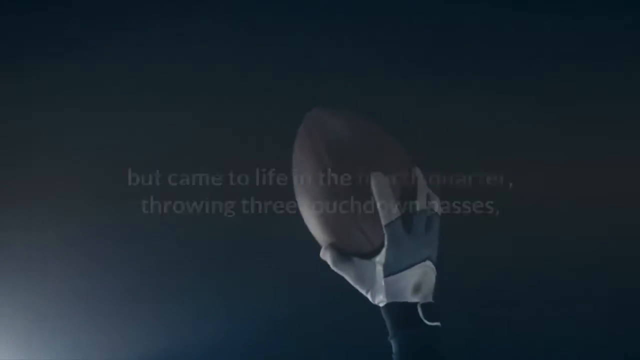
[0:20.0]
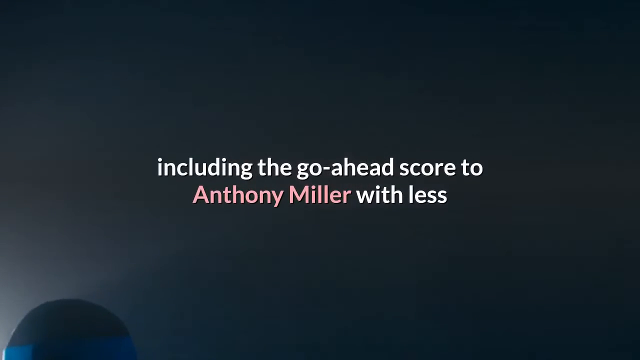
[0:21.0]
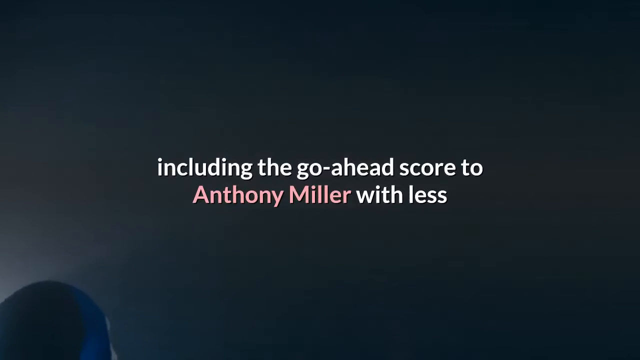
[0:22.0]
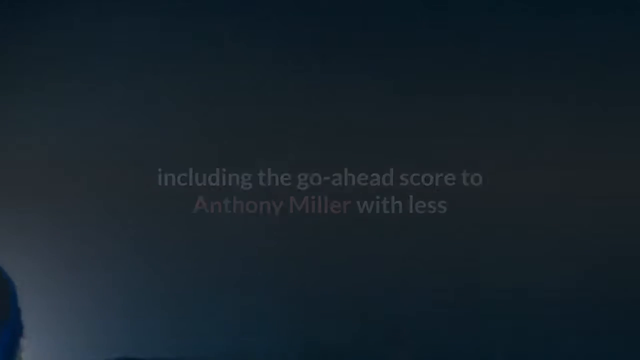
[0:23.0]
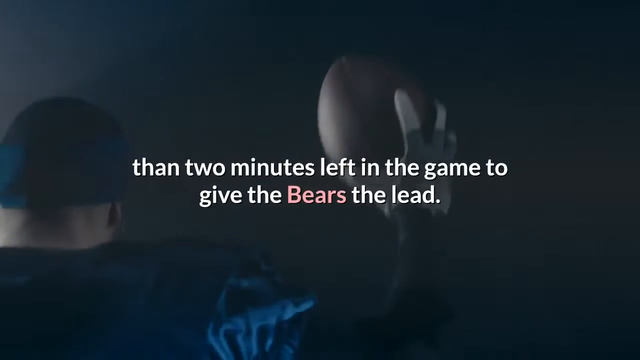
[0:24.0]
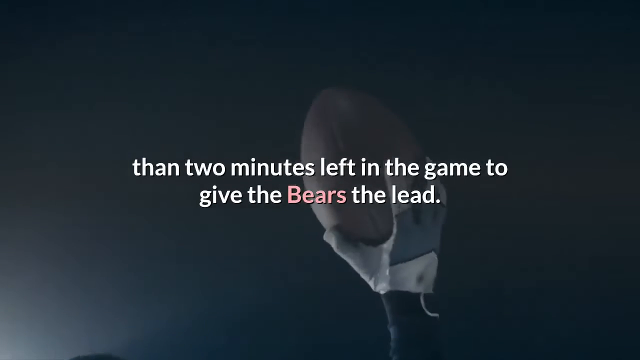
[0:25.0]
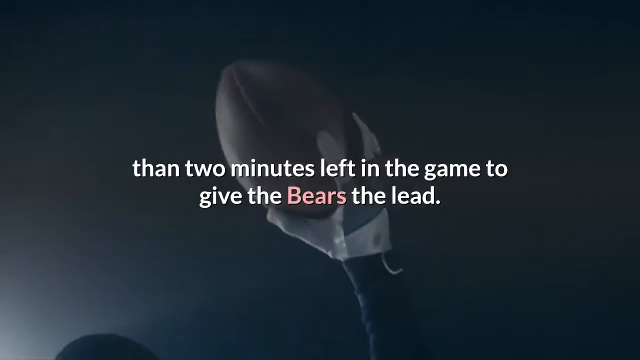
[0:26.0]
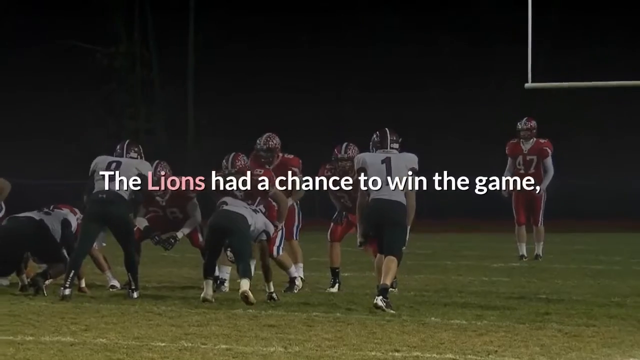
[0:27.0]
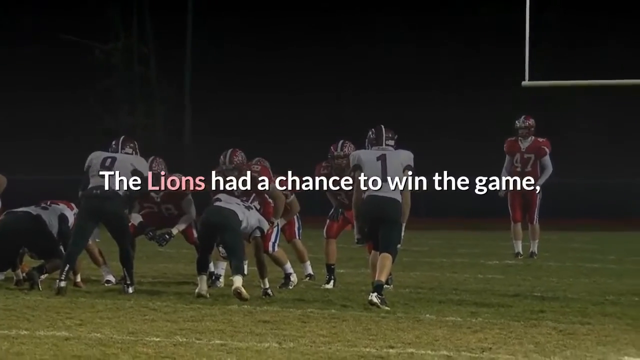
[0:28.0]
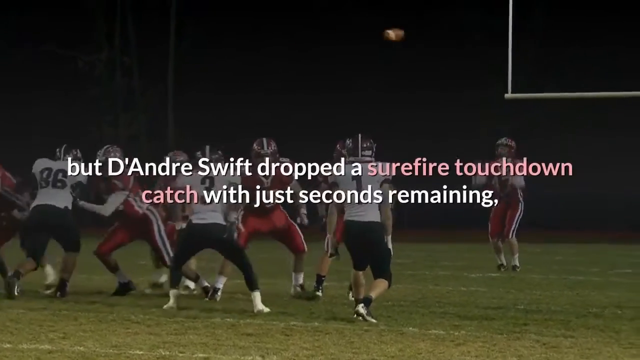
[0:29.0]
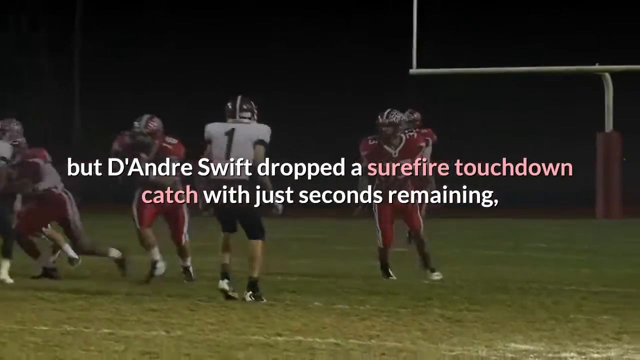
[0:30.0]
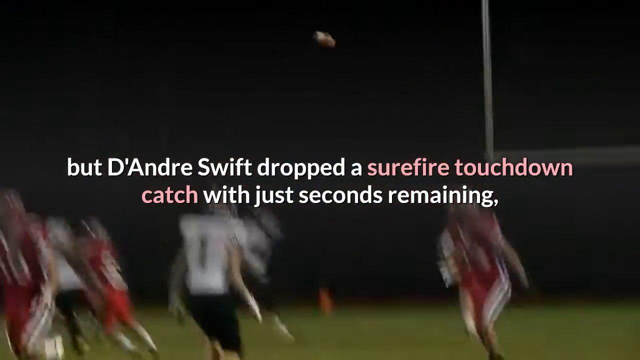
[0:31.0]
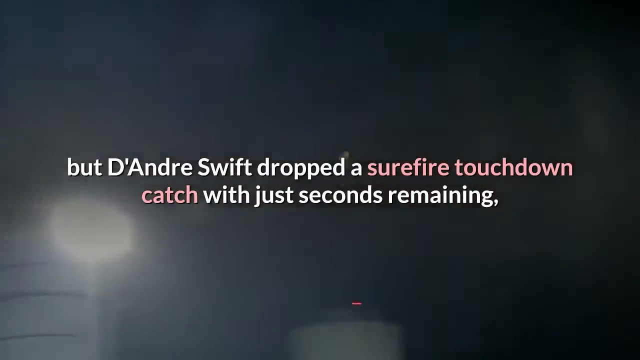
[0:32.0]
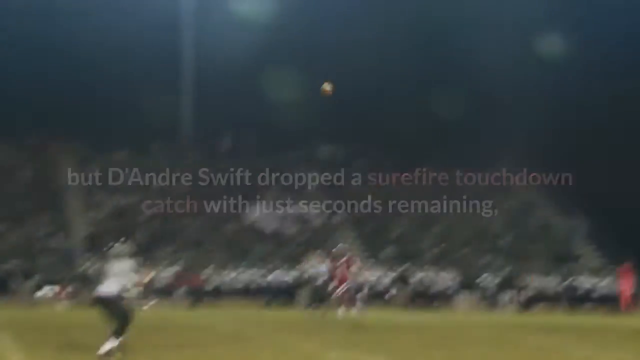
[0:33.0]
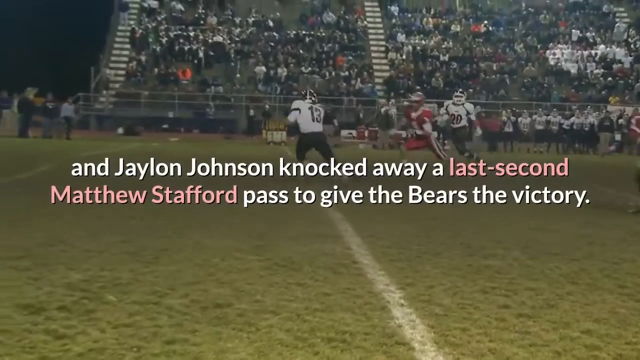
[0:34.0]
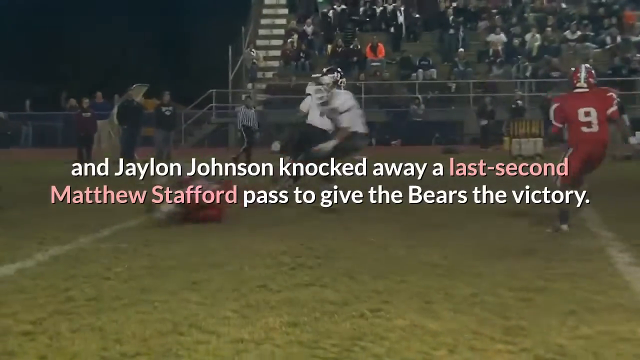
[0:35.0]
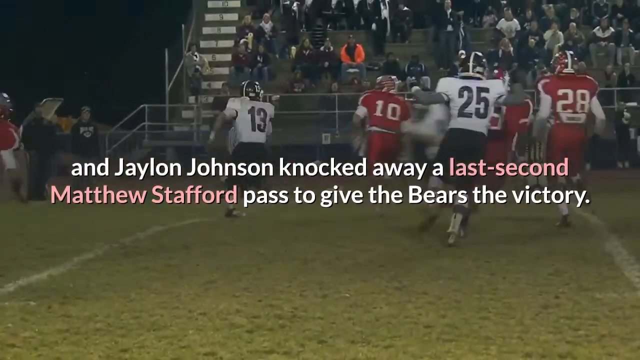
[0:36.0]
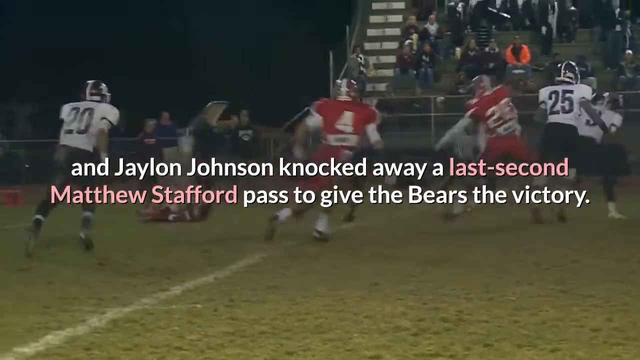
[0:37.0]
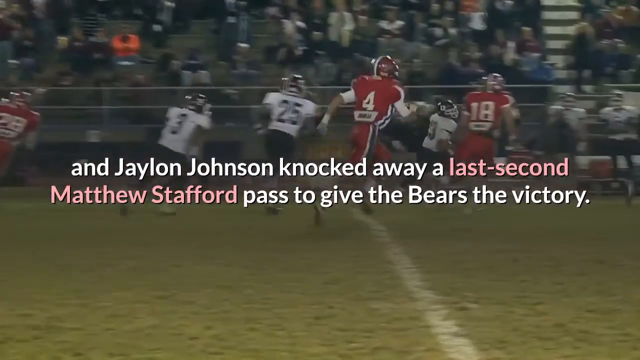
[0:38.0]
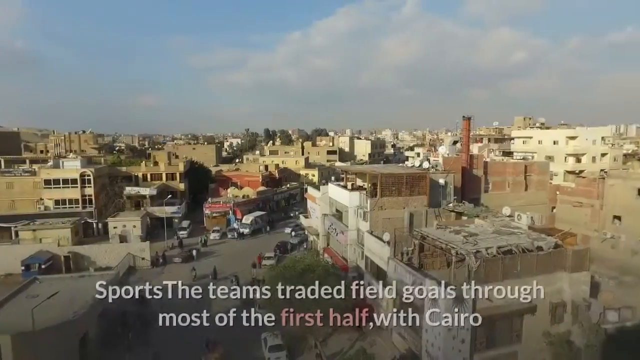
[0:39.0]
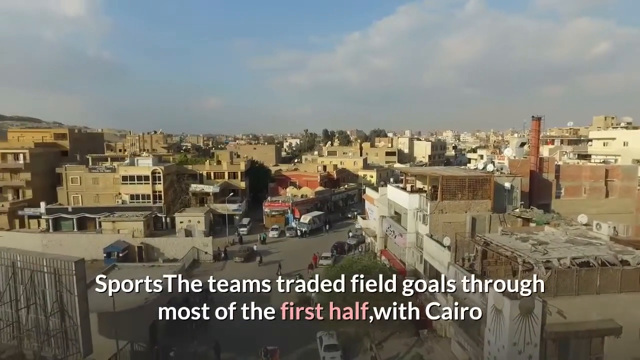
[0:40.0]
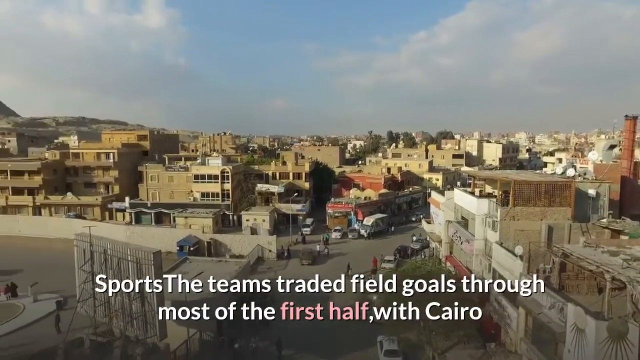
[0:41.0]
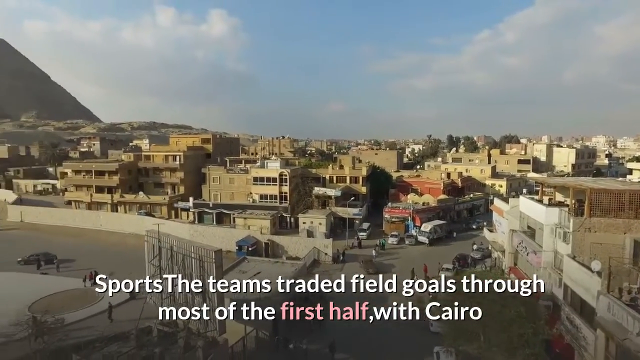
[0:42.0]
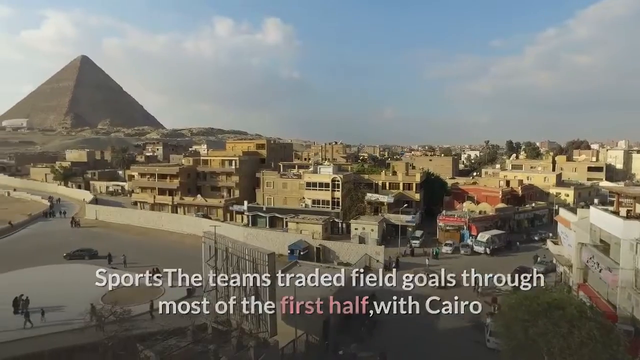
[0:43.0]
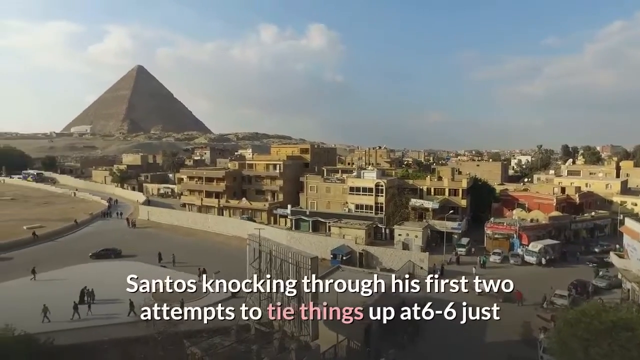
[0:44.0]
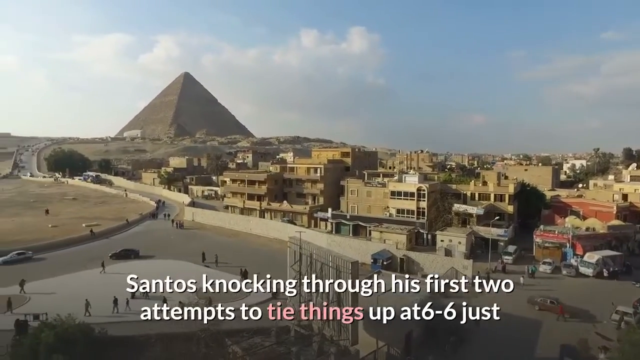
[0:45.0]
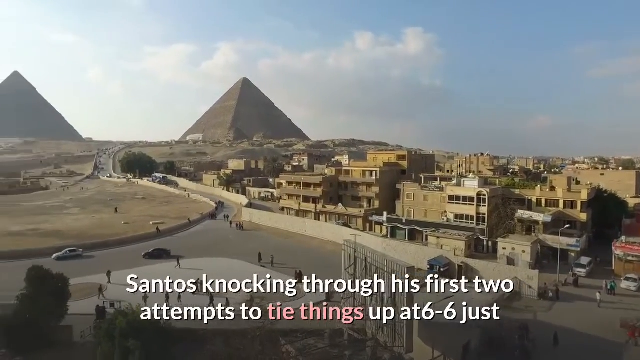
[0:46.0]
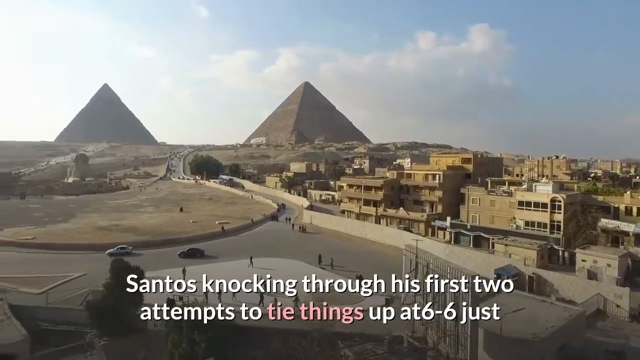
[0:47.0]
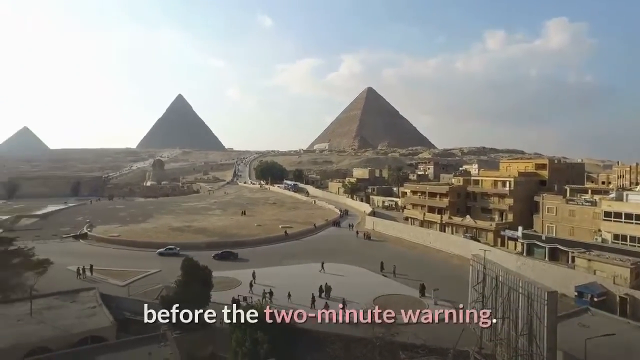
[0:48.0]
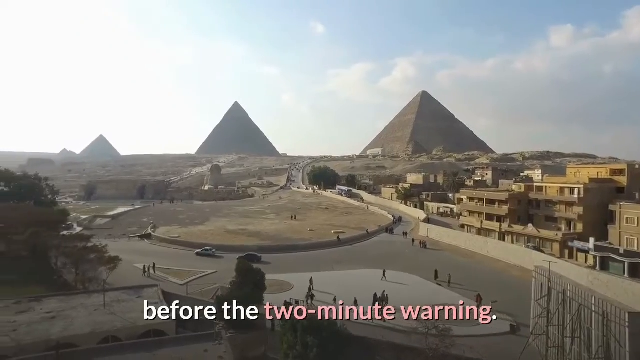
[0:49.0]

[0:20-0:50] Text is written on a black background alongside a moving picture of a man holding a football. The text reads "including the go-ahead score to Anthony Miller with less than two minutes left in the game." The next screen shows what looks like a match between a red team and a white team on an American football pitch. The players wear helmets; one team wears red jerseys and red pants, the other white jerseys and black pants, on a green field. Text reads "the Lions had a chance to win the game but Andre Swift dropped a surefire touchdown catch with just seconds remaining and Jalen Johnson knocked away a last second Matthew Stafford pass." Next comes a view of a city with grey walls and buildings under a blue sky, with an Egyptian pyramid at the back, suggesting the footage is from Egypt. The camera shifts away from the city to give a clear picture of the pyramid, and more pyramids are shown, three in total. As the city appears, text at the bottom mentions "through most of the first half, with Cairo Santos knocking through his first two attempts to tie things up at 6-6."